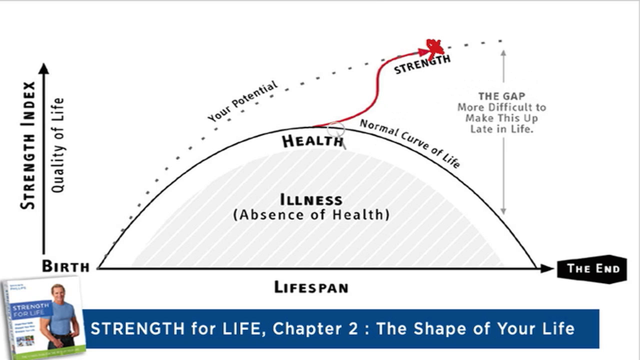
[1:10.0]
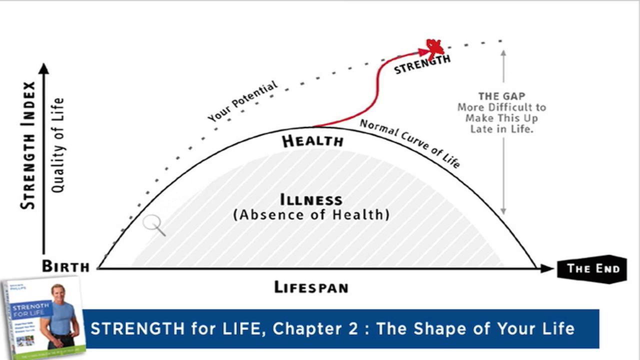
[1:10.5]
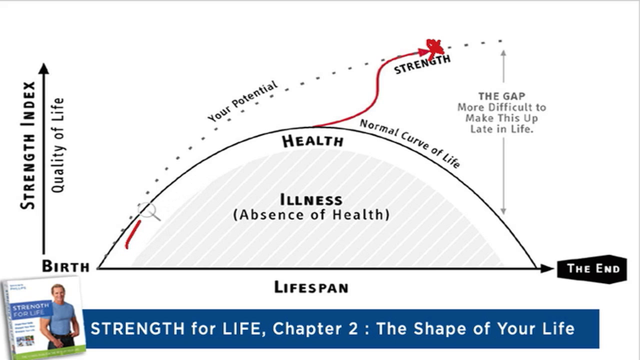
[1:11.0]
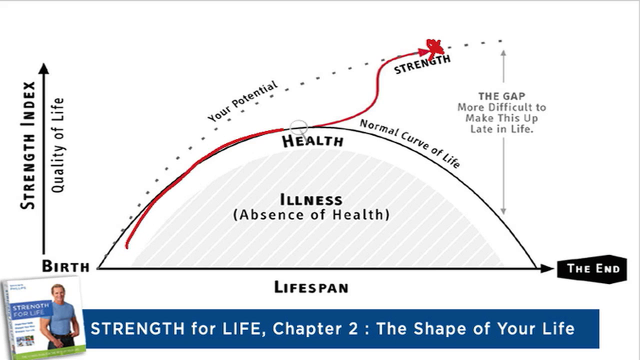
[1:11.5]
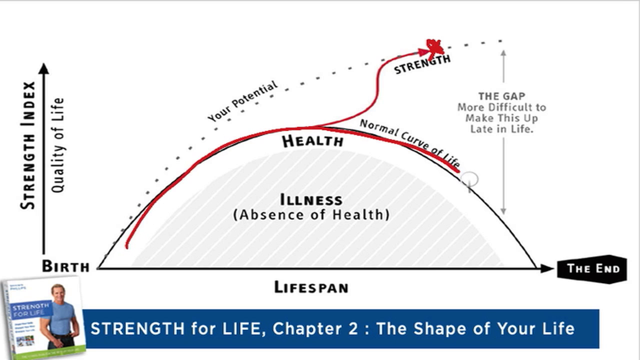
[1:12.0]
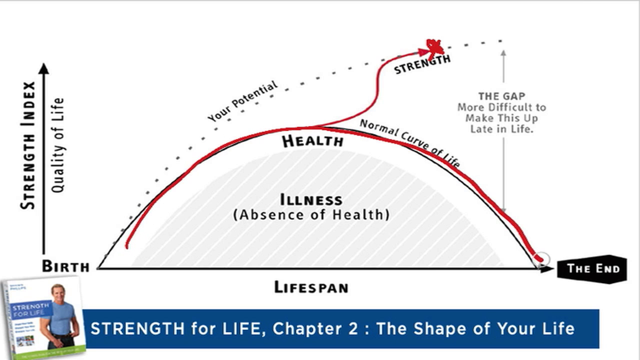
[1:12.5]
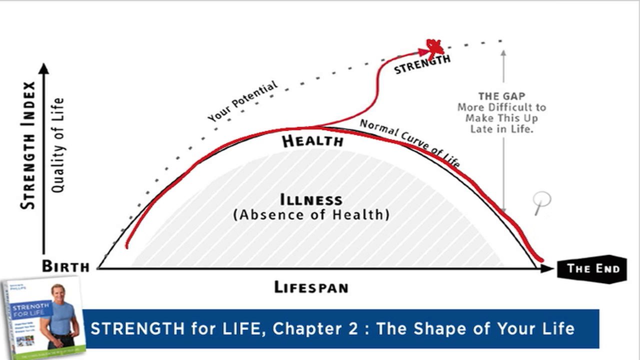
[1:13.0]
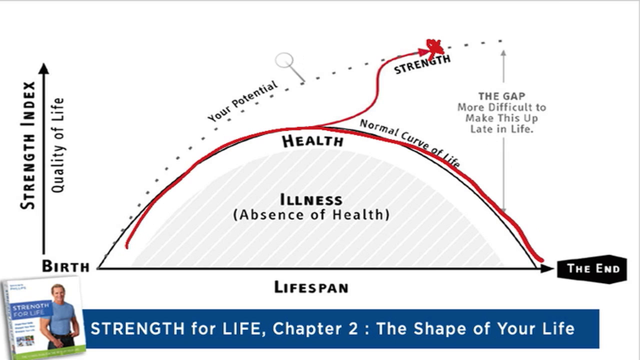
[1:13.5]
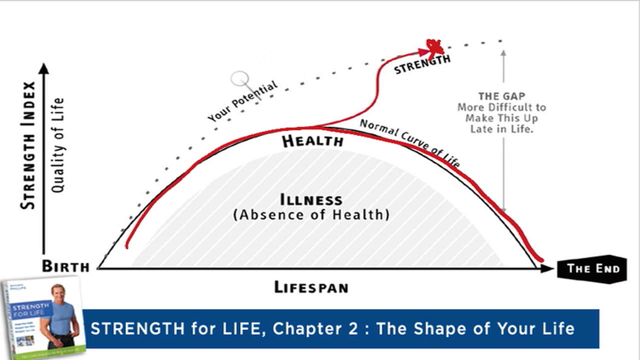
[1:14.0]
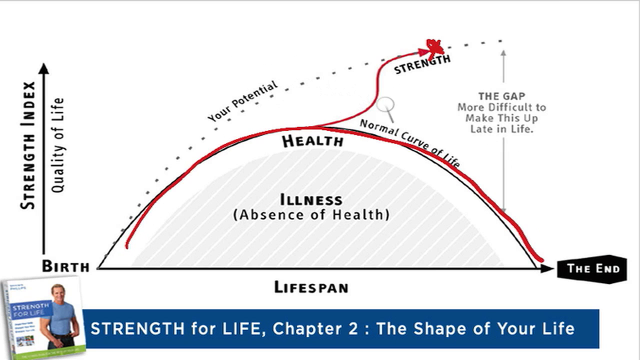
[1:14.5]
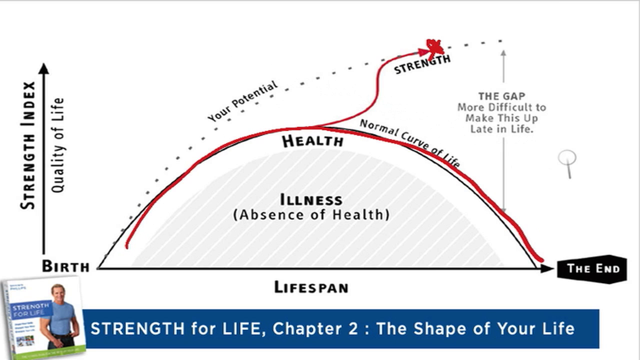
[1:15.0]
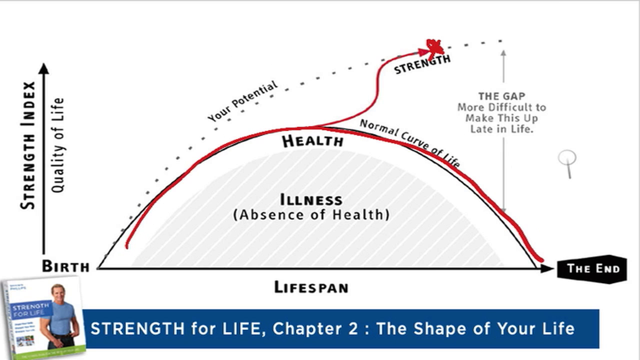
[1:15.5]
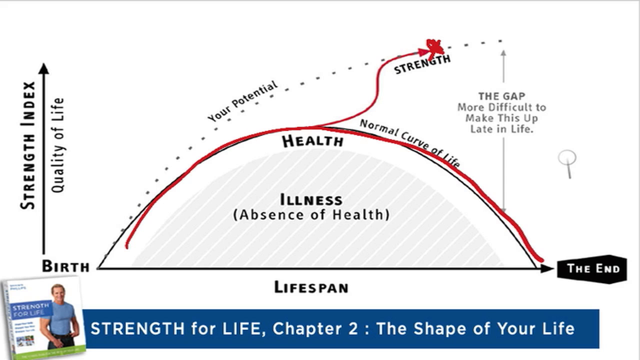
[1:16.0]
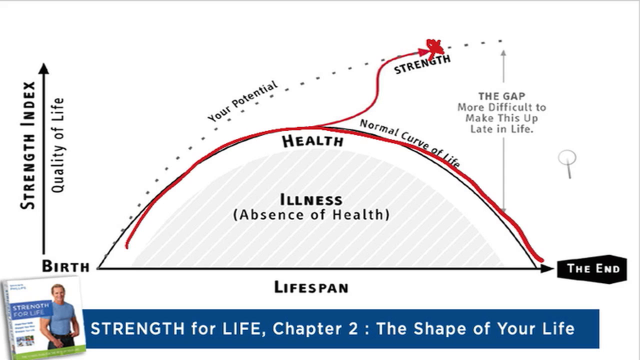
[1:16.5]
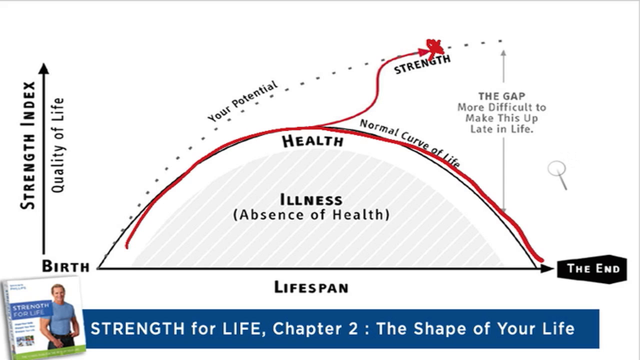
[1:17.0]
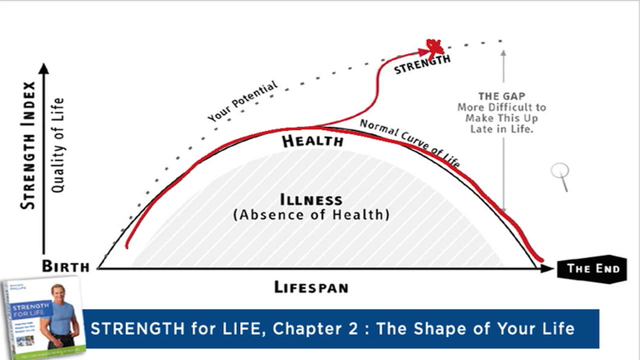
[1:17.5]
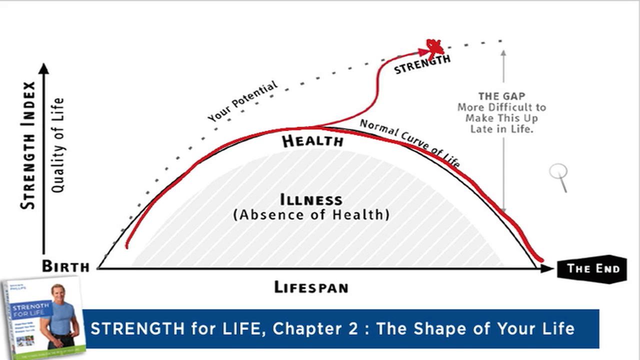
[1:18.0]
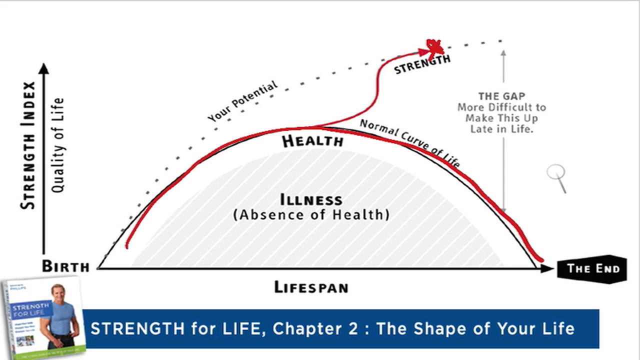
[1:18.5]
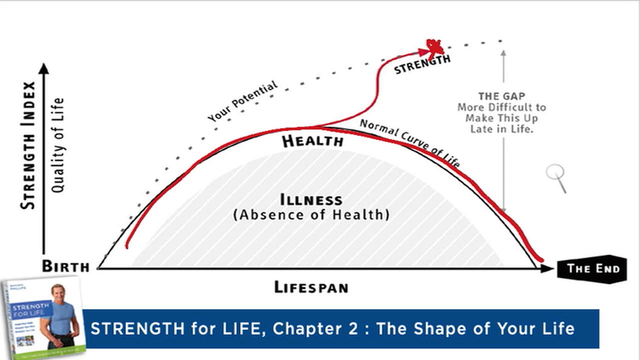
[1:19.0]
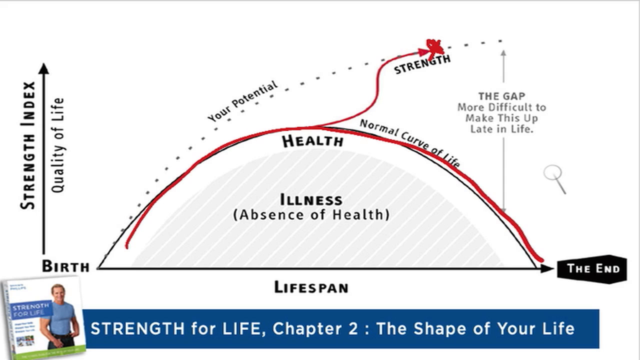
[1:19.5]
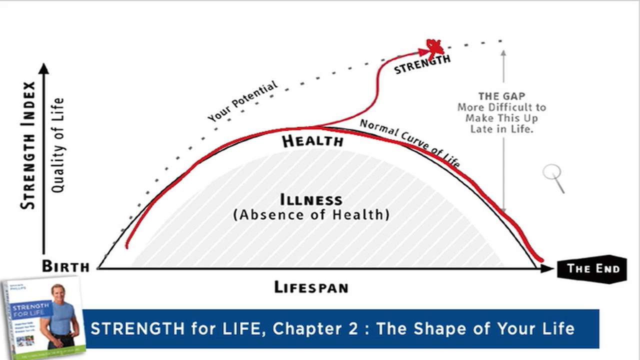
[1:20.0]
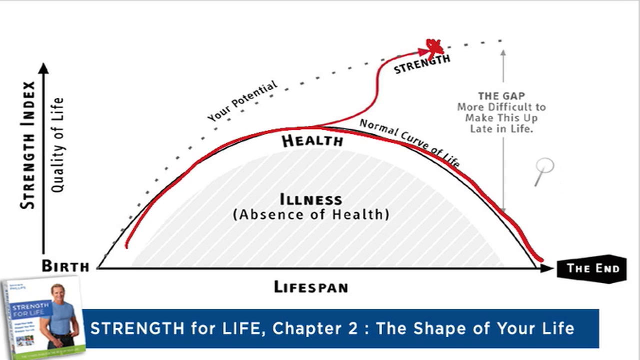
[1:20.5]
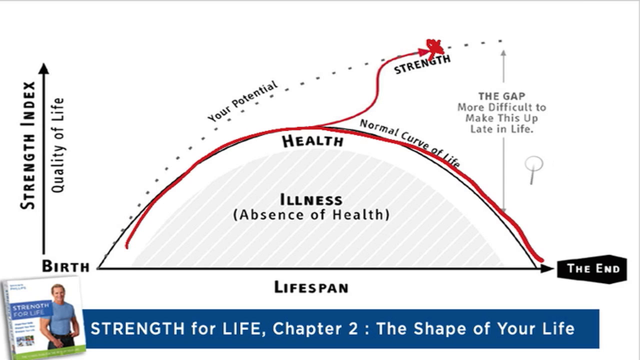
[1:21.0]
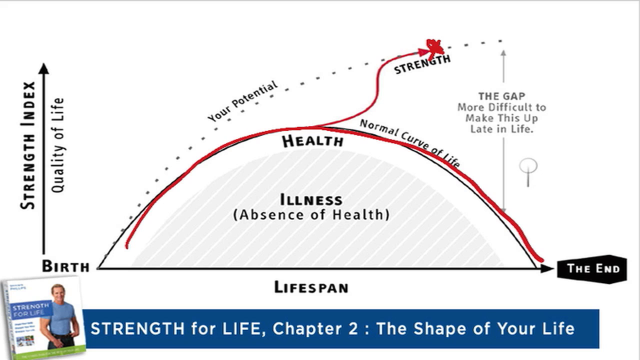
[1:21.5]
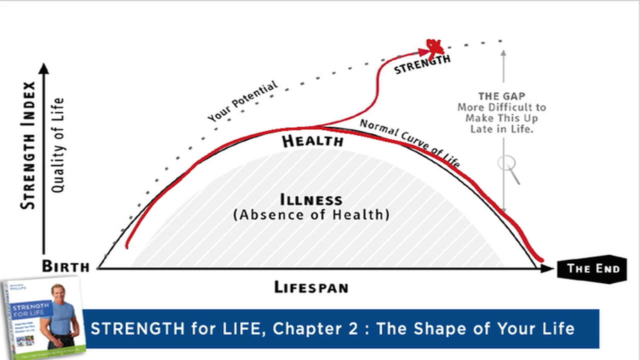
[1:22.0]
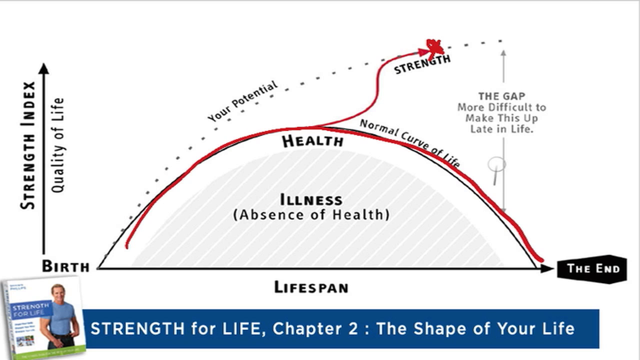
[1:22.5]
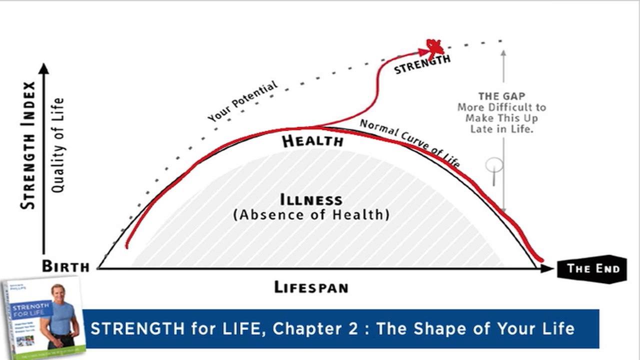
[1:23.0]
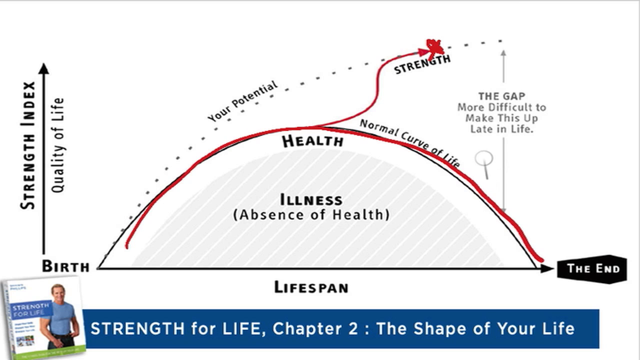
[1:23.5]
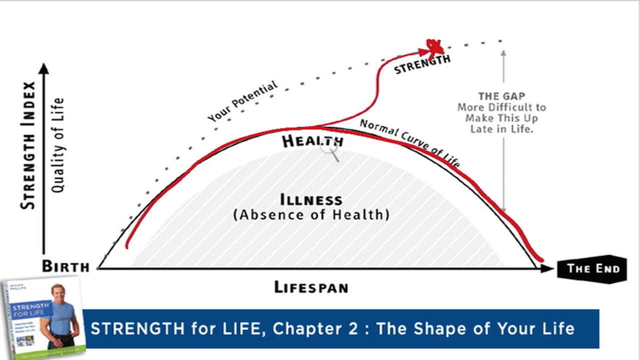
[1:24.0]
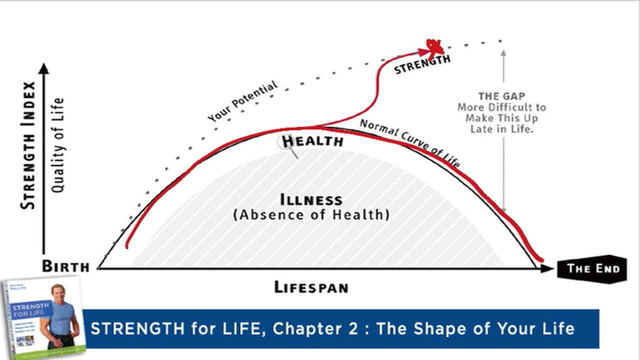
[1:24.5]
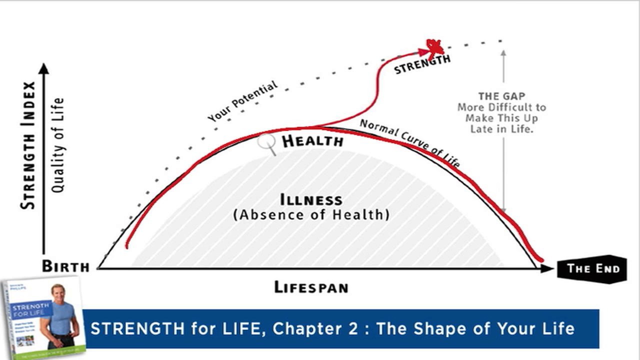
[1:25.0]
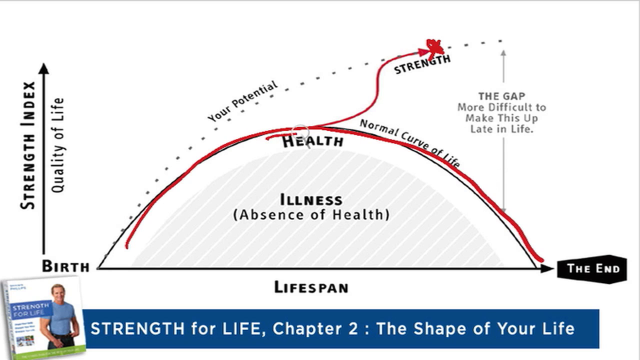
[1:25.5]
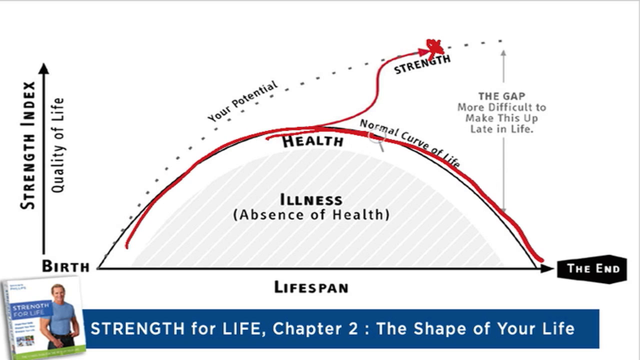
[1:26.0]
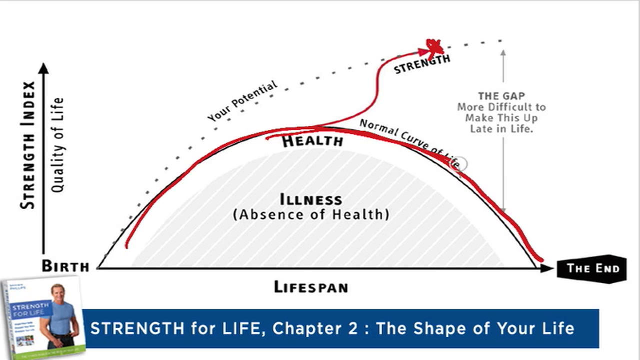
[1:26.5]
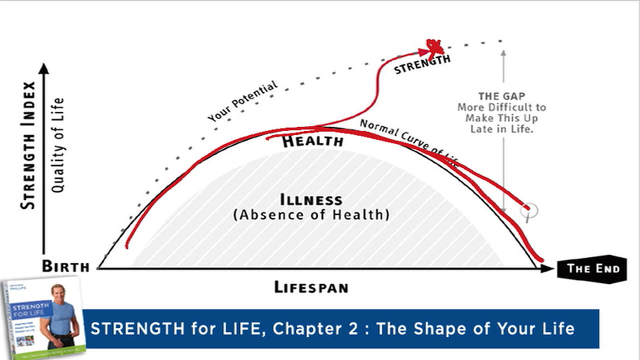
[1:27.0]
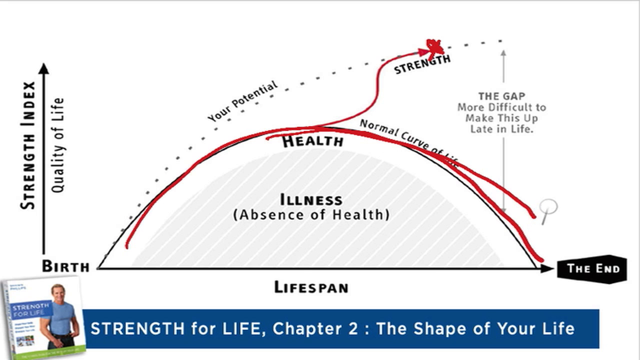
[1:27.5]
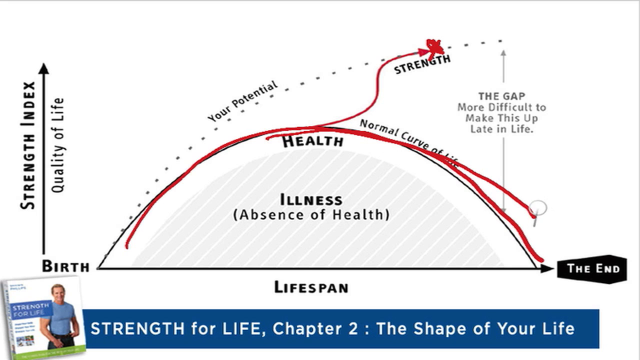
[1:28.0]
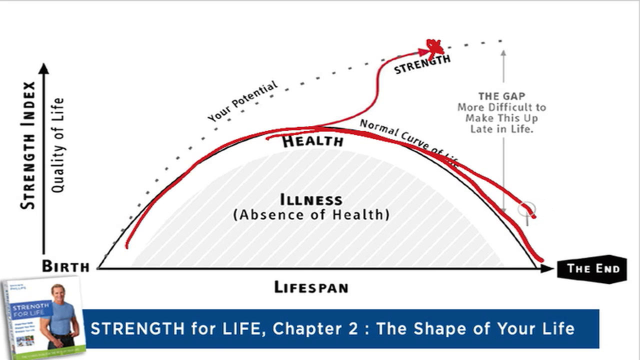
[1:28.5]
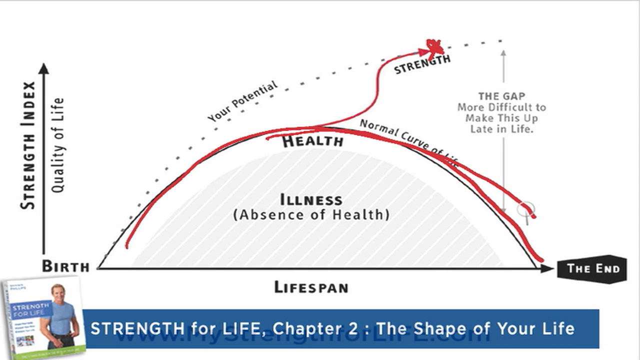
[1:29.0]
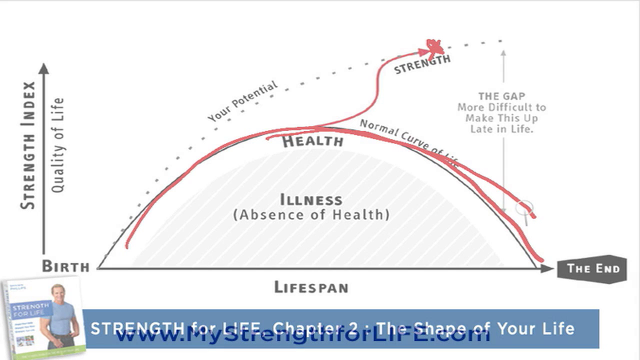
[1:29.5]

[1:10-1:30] The screen shows "strength index" and "quality of life" with a bar and an image. A straight line shows potential, and a curve line points to the normal curve of life, indicating health, as well as illness and absence of health. A gap in the lifespan is marked "the gap" with the text "more difficult to make this up later in life". There is a huge gap, and the curve goes down toward the end of life.